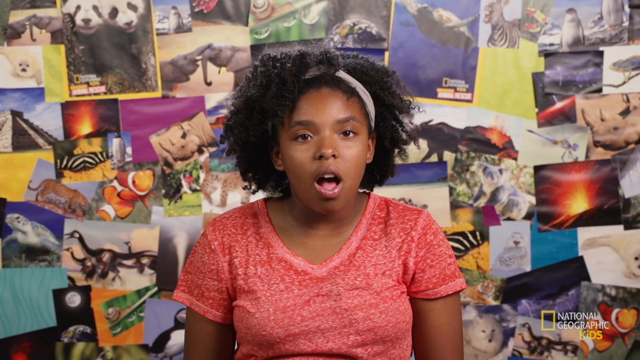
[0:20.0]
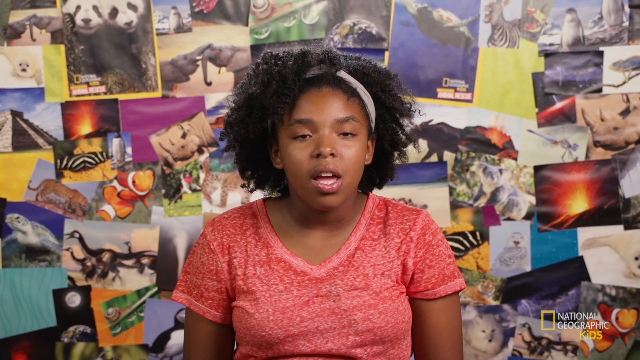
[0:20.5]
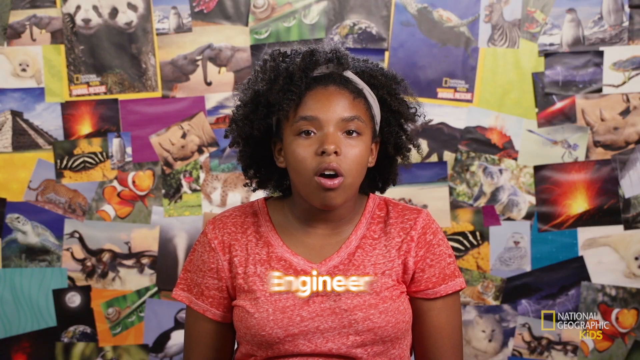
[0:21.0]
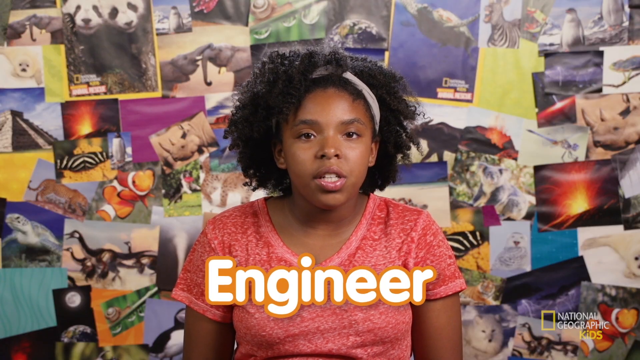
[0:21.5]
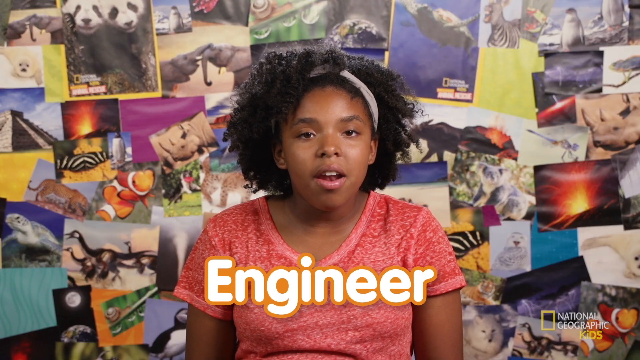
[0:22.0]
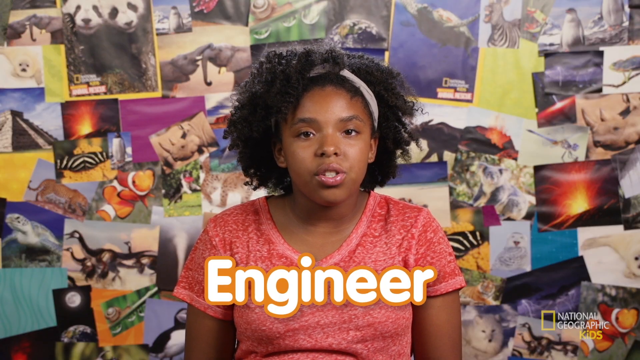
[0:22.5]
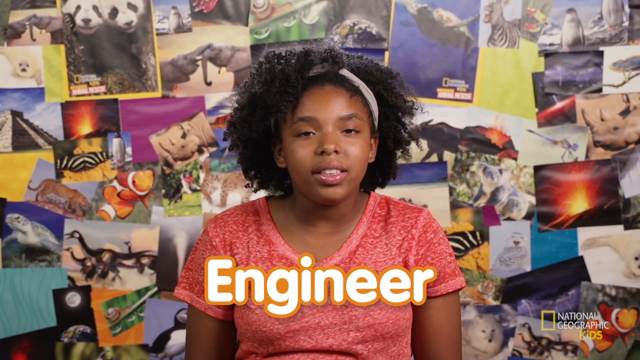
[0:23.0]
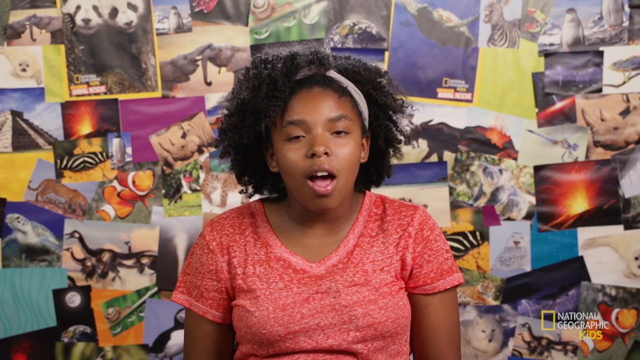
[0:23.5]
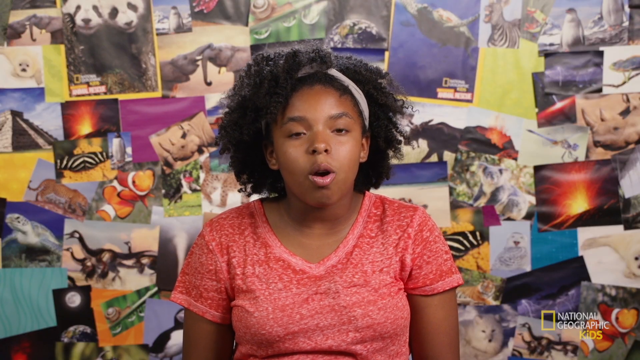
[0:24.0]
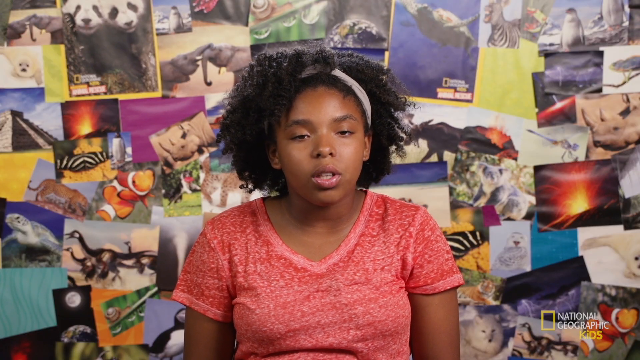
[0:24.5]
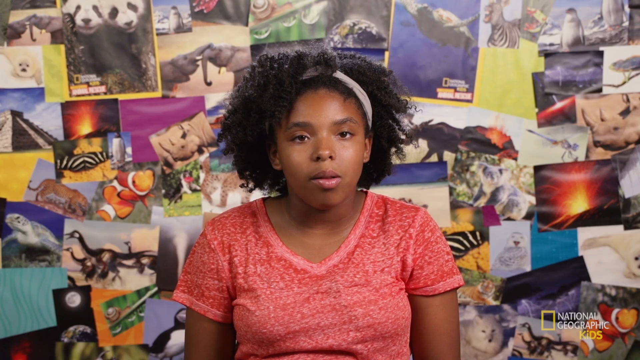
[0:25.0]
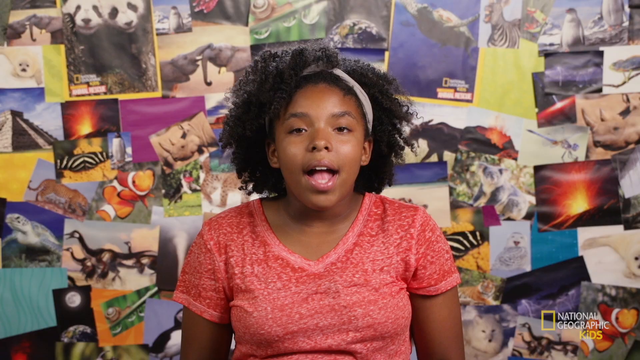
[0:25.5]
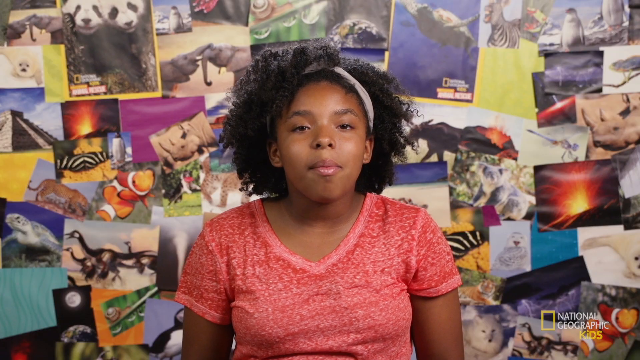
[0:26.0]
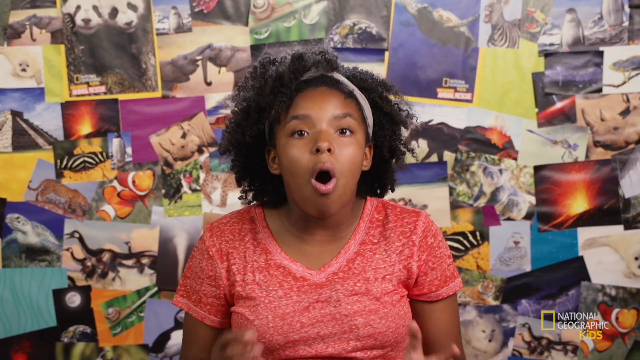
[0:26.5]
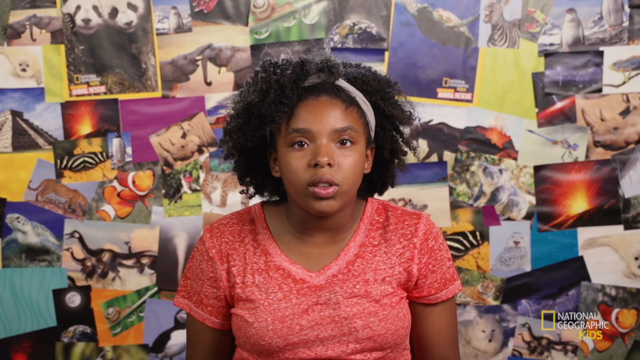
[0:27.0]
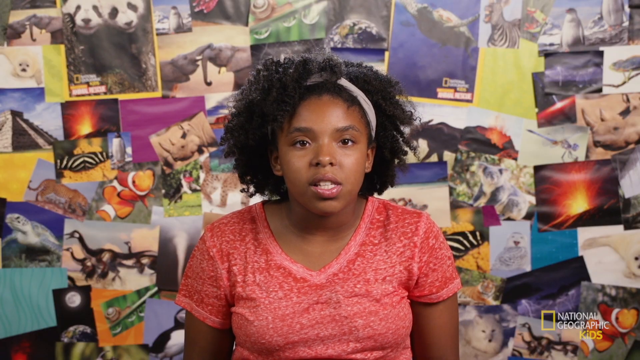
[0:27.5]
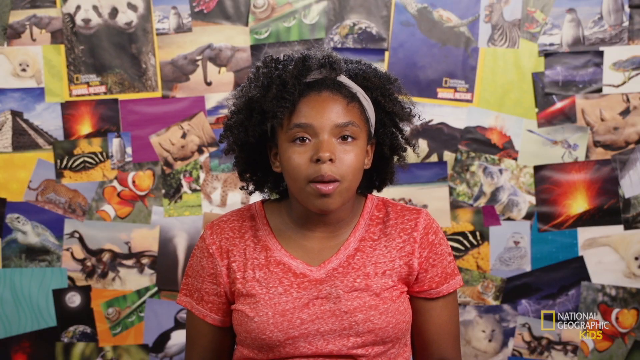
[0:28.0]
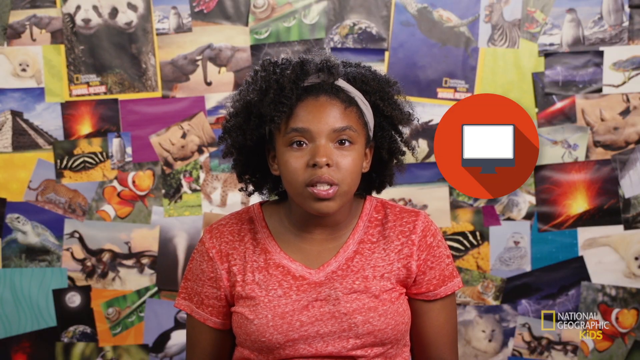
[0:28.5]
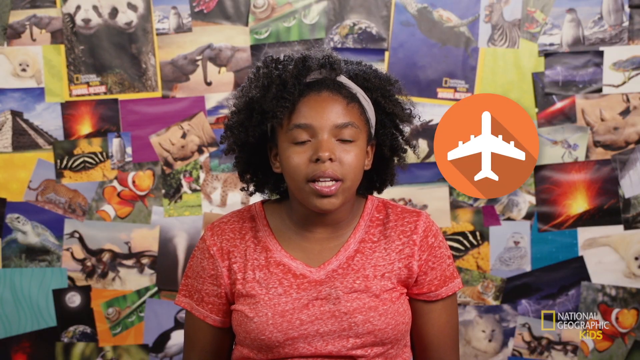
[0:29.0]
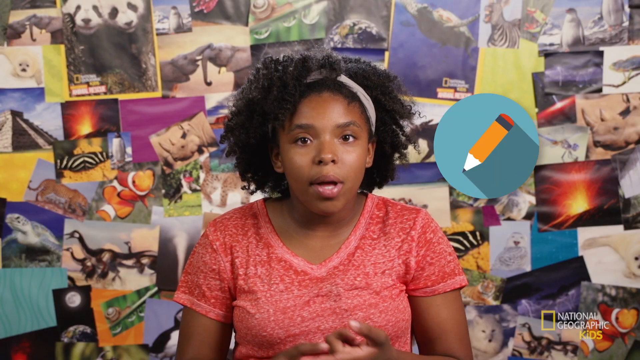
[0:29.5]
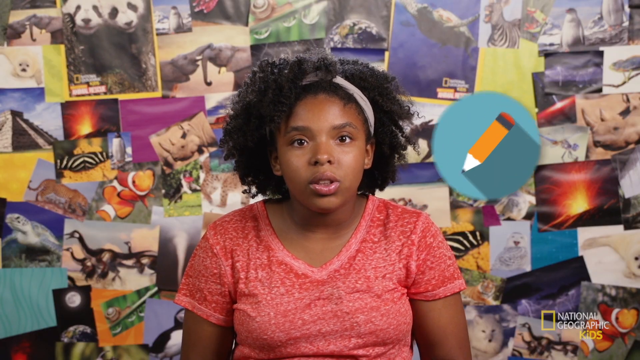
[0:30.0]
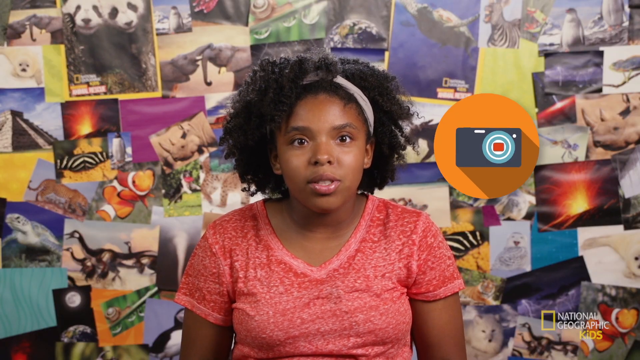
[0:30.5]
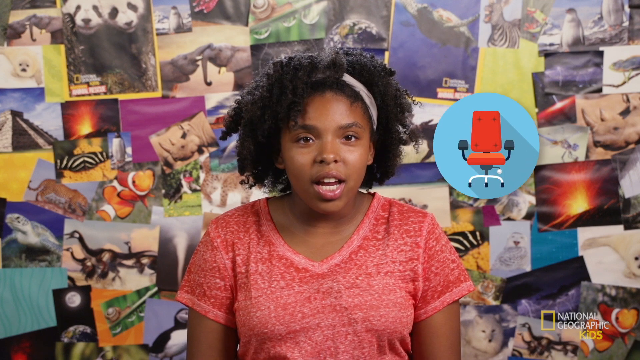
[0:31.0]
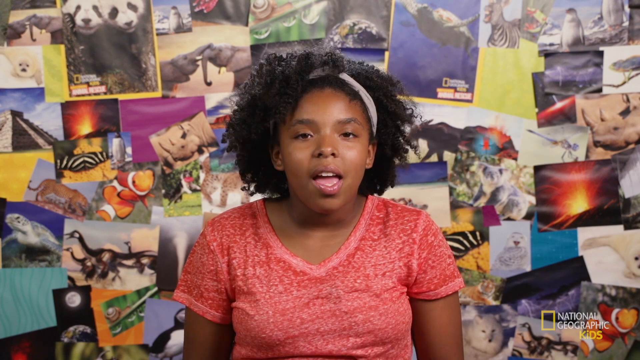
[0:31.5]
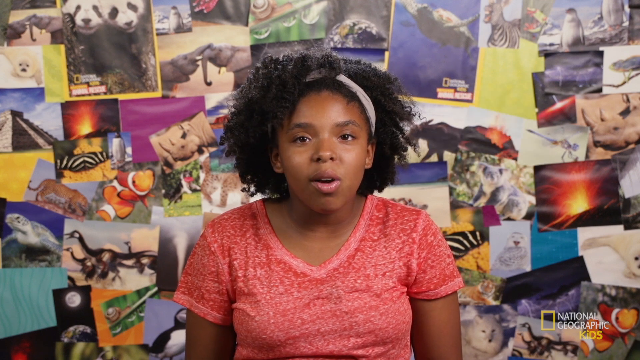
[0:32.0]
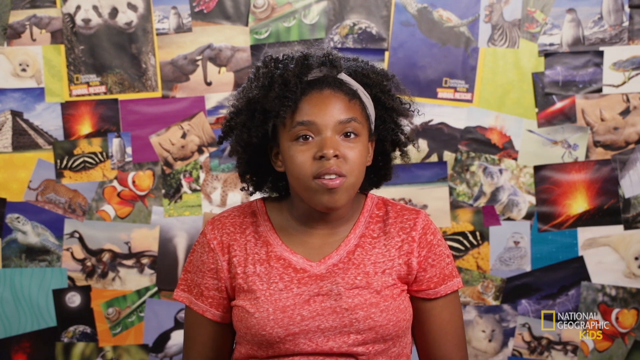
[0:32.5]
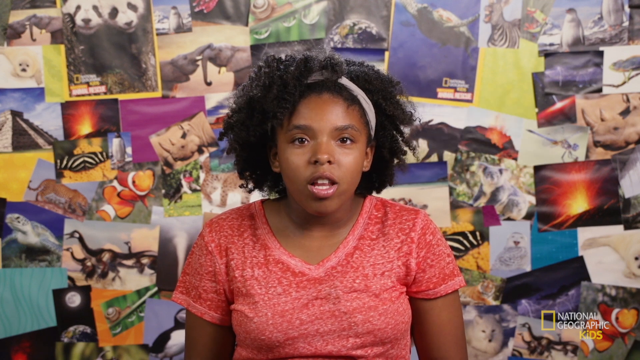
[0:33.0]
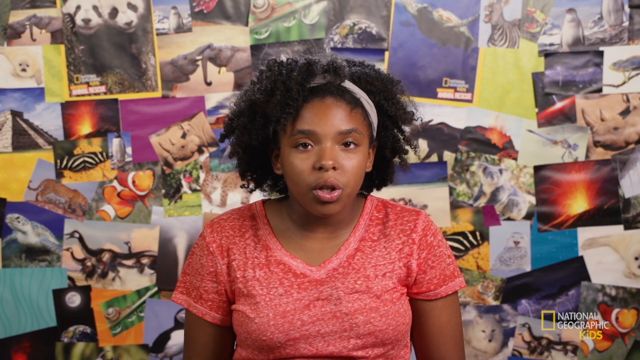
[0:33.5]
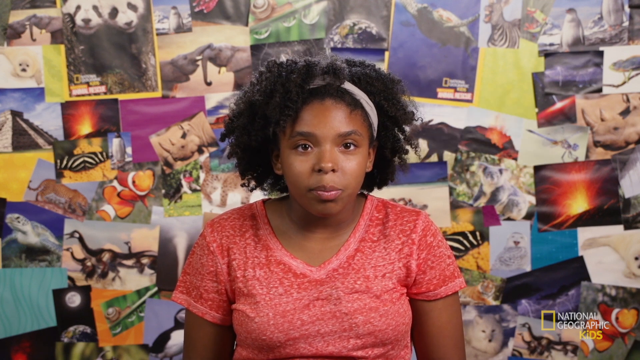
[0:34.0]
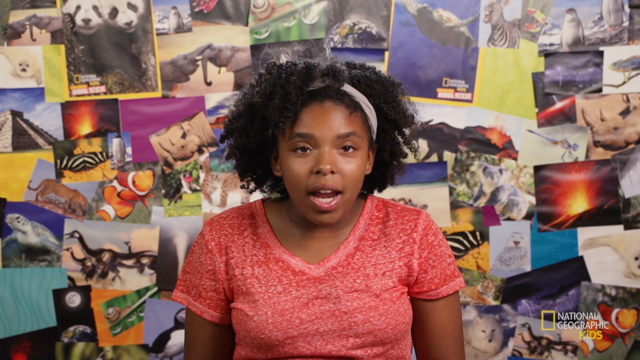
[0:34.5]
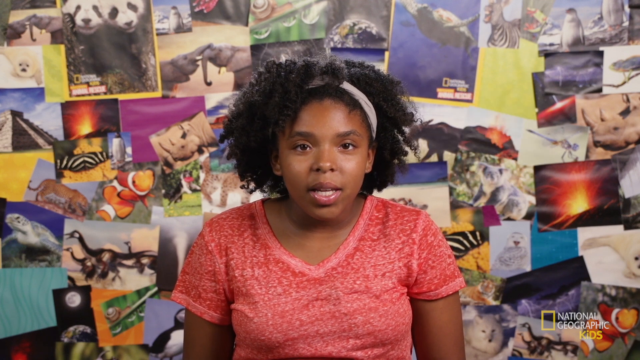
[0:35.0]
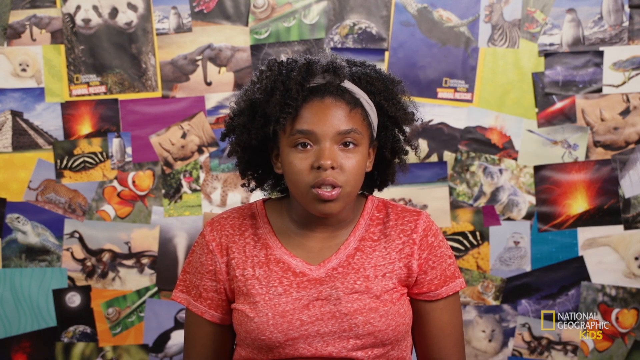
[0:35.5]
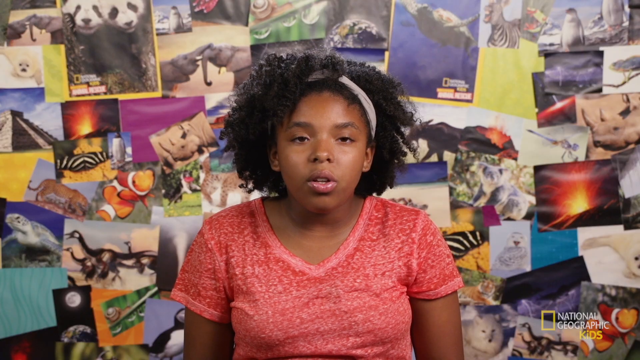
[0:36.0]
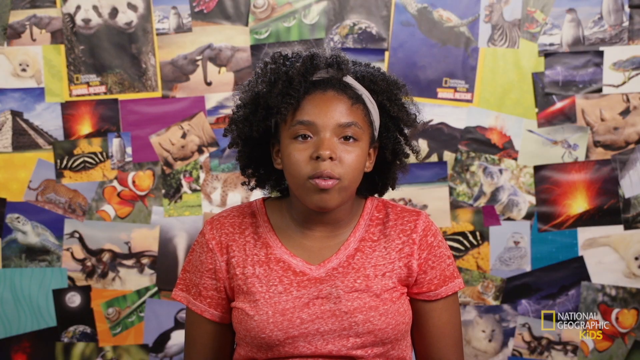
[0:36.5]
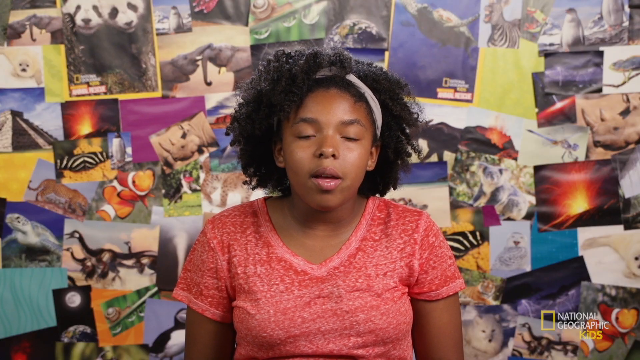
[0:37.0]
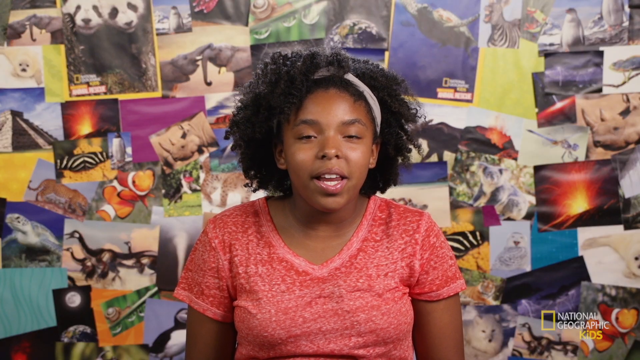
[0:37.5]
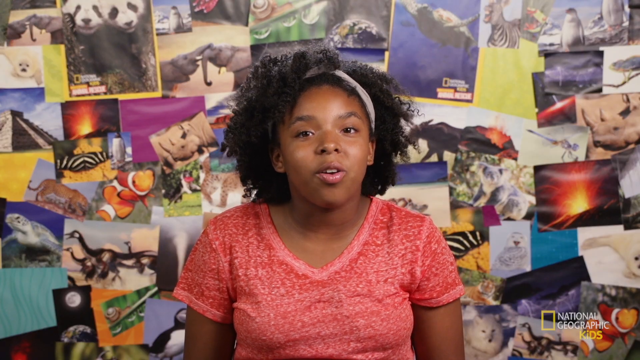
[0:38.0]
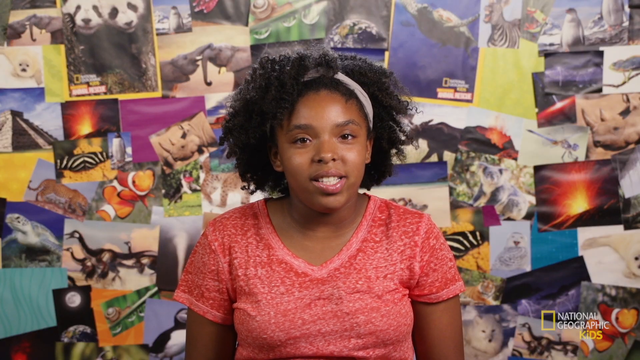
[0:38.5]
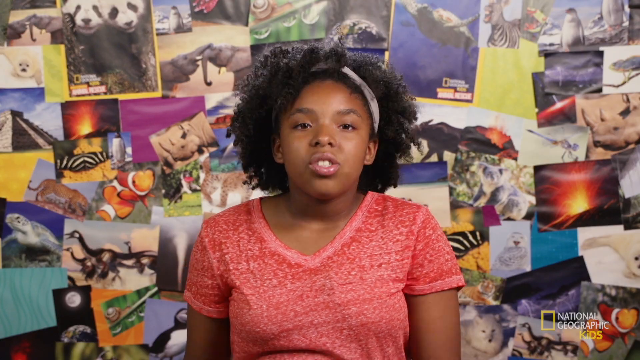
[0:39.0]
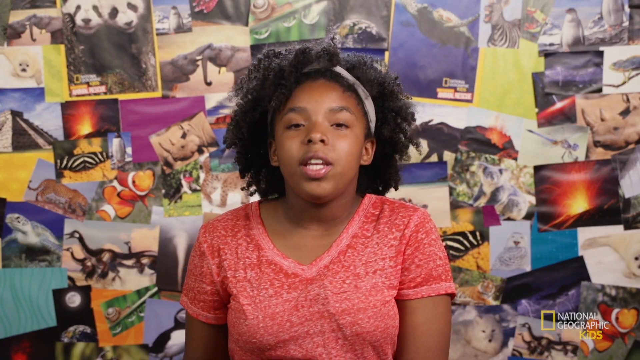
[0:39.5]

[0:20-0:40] Isis is in front of a collage of animal photographs, some from National Geographic and some from unknown sources. From top left to bottom right it includes a white seal, elephants, pandas, penguins, more elephants, turtles, zebras, more penguins, rhinos, birds, koalas, some kind of panther, more rhinos, tigers, the pyramids, a volcano erupting, more turtles, dinosaur illustrations, a typhoon, owls and many other animals. The word "engineer" then appears in the middle at the bottom of the screen. Icons appear right next to the woman, one like a TV or a sheet. She talks to the camera and makes some movements. More photos are added to the collage behind her: fish, snails, another volcano erupting and many other pictures from documentaries.